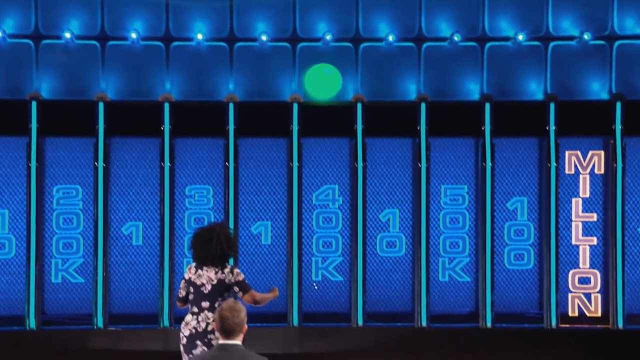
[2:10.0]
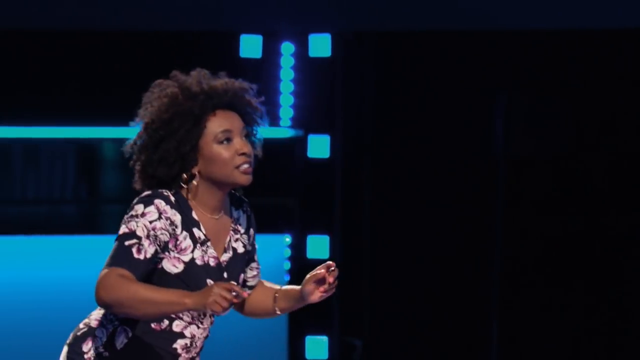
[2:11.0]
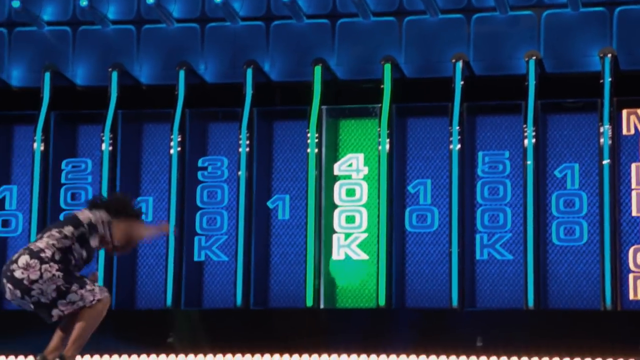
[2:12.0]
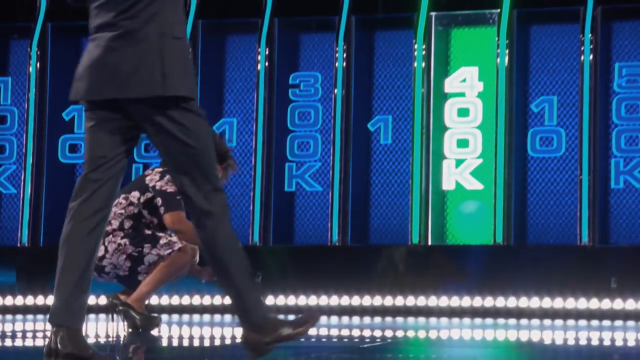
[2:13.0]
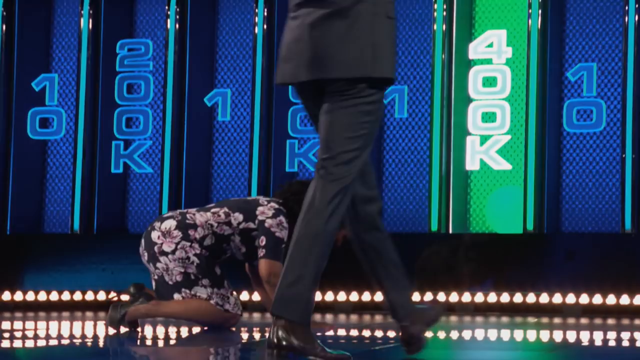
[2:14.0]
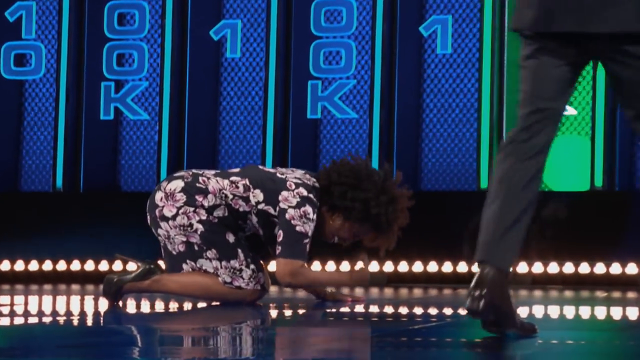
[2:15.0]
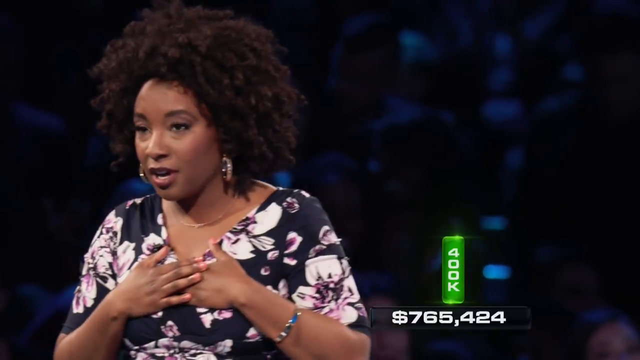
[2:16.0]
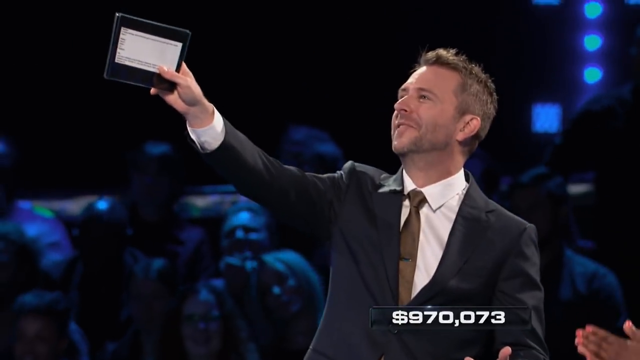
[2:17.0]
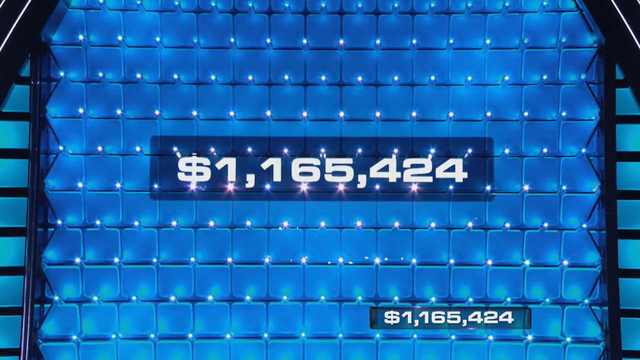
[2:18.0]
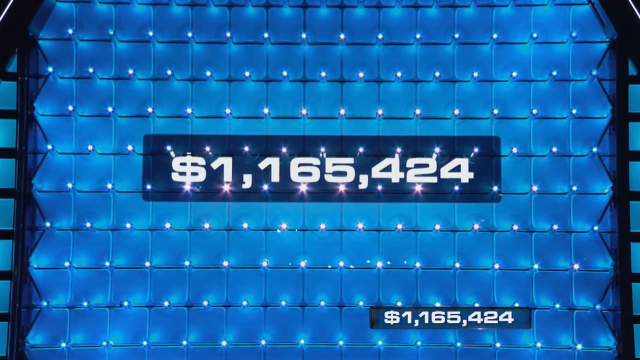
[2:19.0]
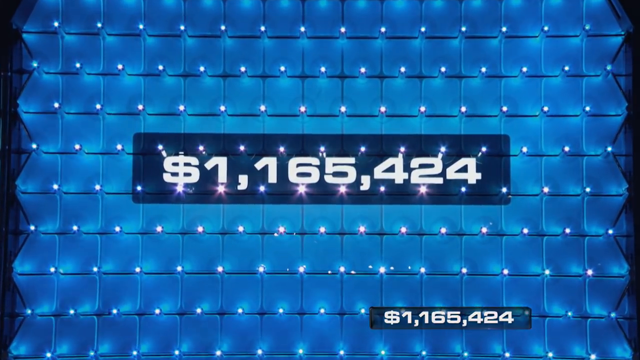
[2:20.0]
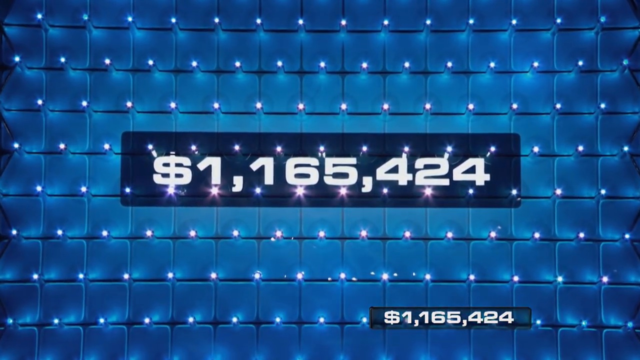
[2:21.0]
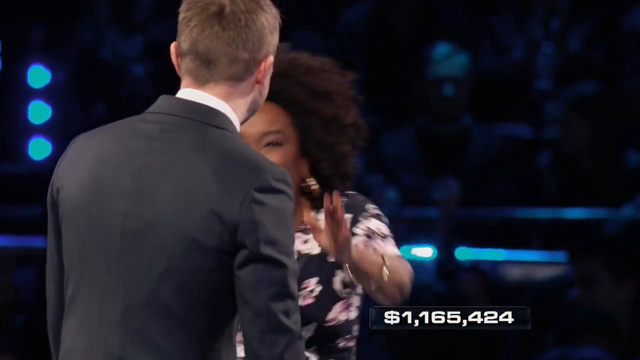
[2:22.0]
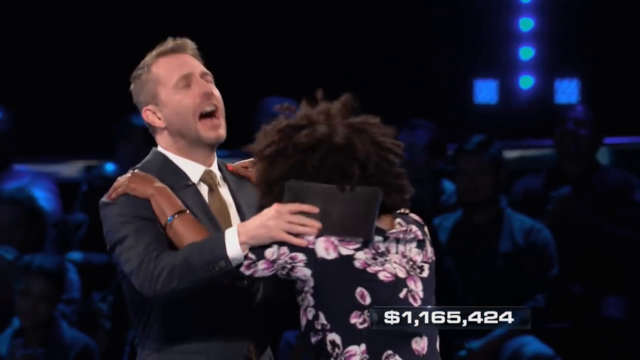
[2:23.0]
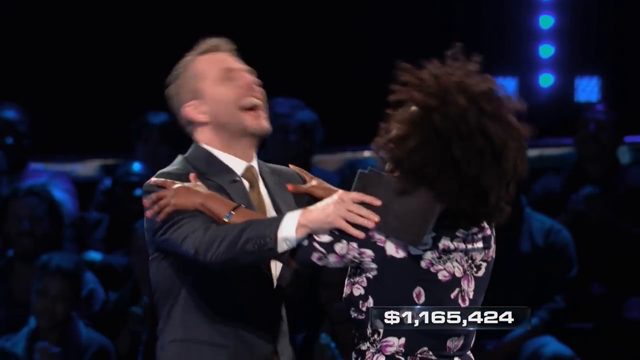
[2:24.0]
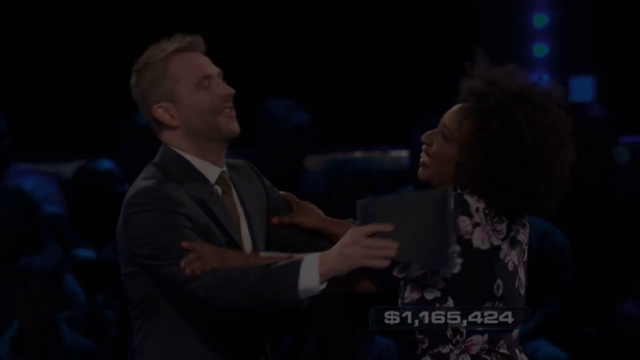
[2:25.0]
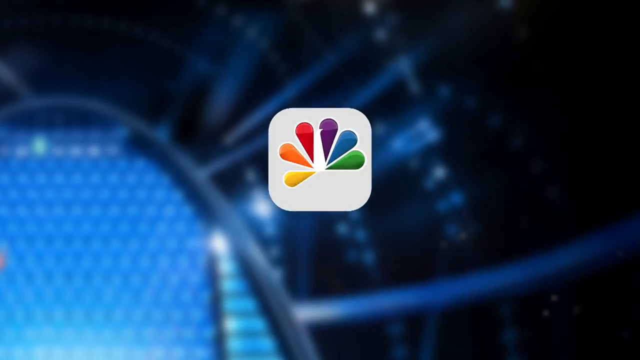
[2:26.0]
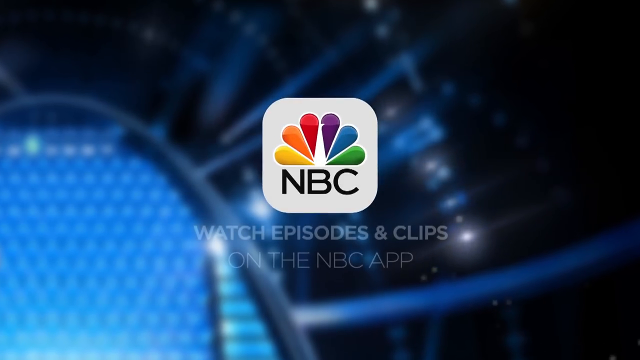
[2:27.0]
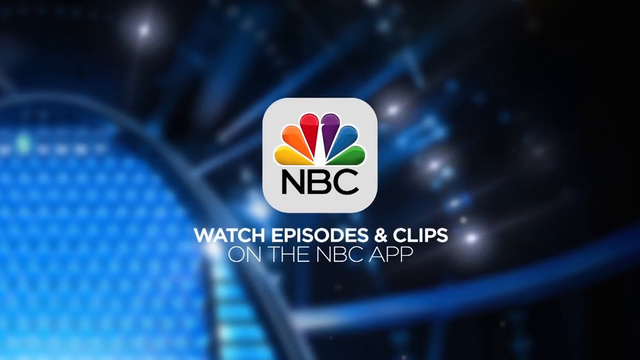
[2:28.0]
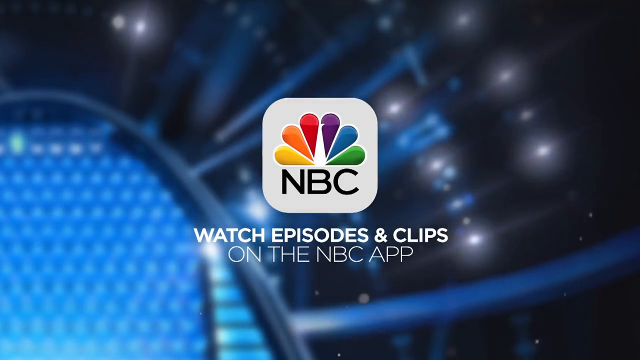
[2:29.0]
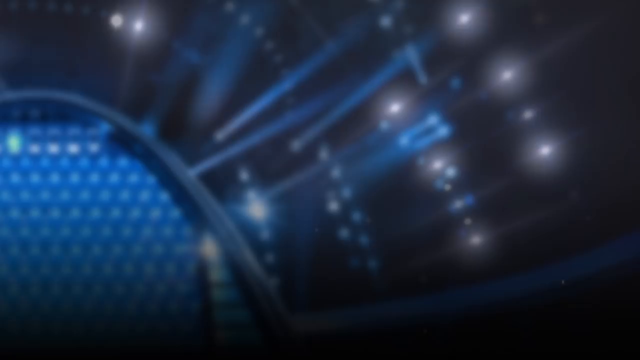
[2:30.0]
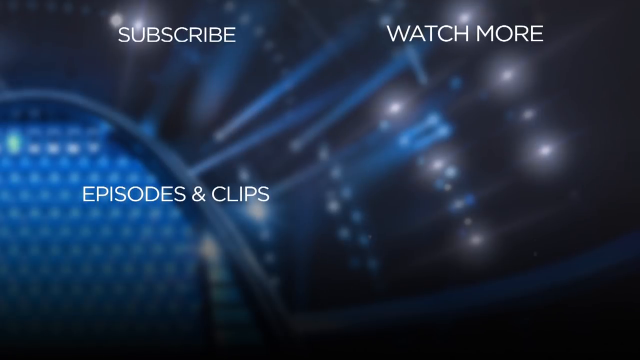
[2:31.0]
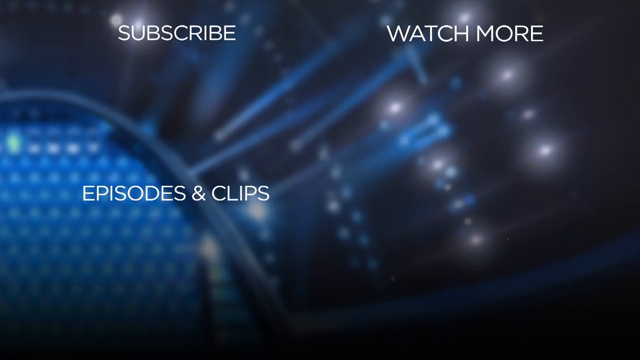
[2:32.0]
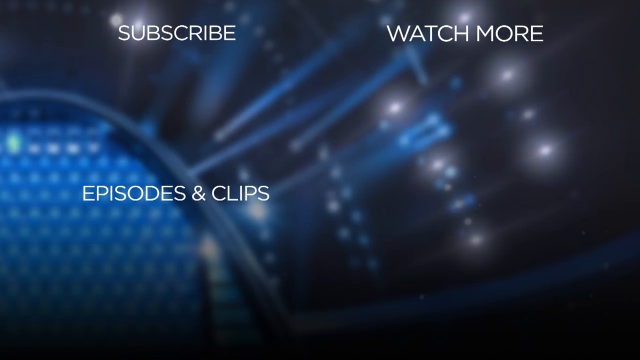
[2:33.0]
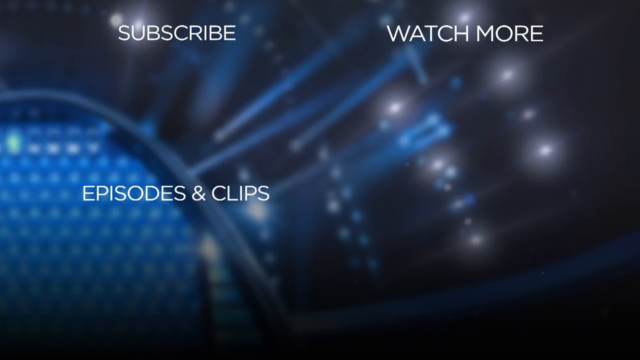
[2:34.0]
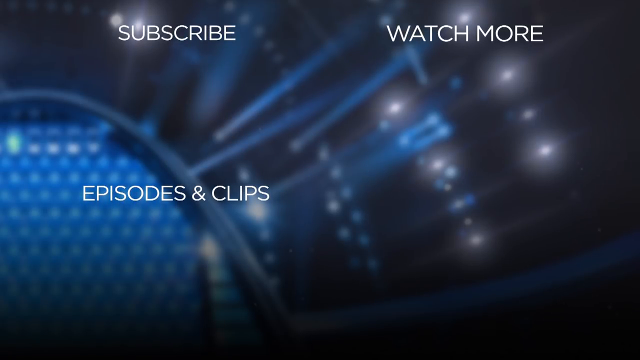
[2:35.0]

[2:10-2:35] The replay continues, showing the green ball falling down the blue screen unpredictably past the different dollar amounts where it could land, and the woman in the flower dress very excited as the ball lands in the 400k spot. In the replay she is so excited that she falls to the ground, puts her hands on the ground and starts hitting it with her right hand. The woman in the flower dress has a very relieved expression while the talk show host points at the blue screen with his notebook or list in his right hand. The blue screen in front of them shows the dollar amount "$1,165,424". The woman in the flower dress laughs and keeps clapping, then puts both hands on the host's shoulders and shakes him; the host makes a mocking motion as he is shaken and laughs at the same time. A logo for the network NBC appears.